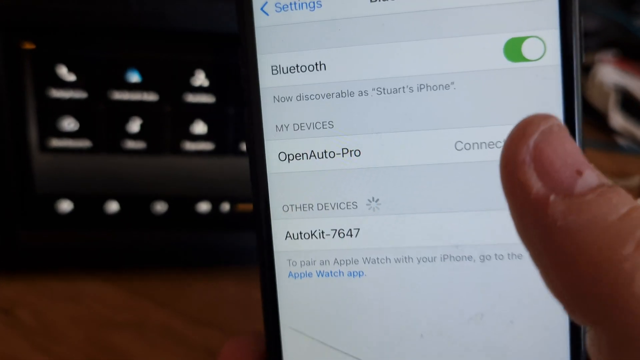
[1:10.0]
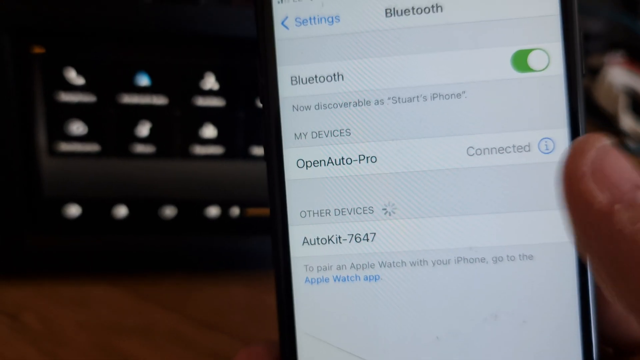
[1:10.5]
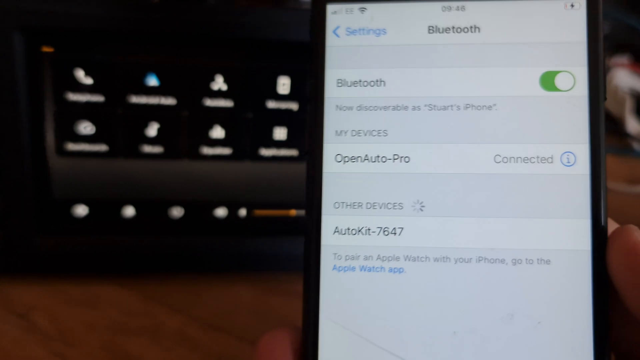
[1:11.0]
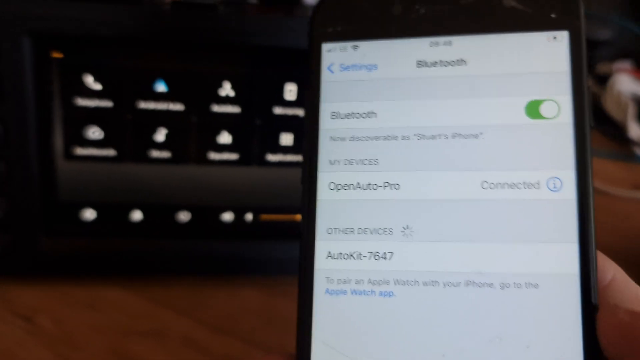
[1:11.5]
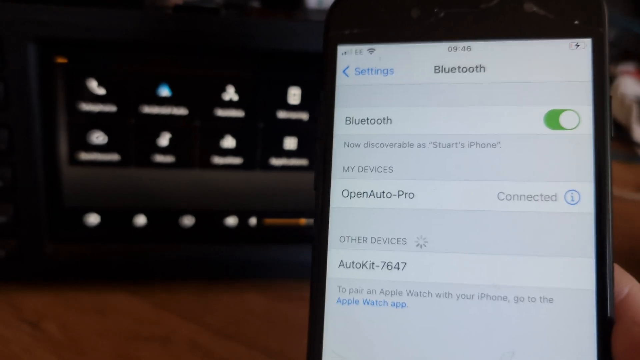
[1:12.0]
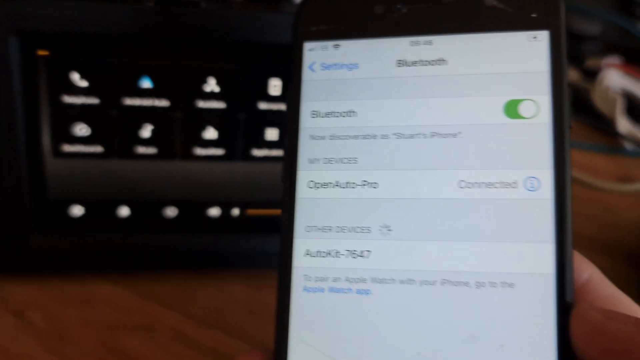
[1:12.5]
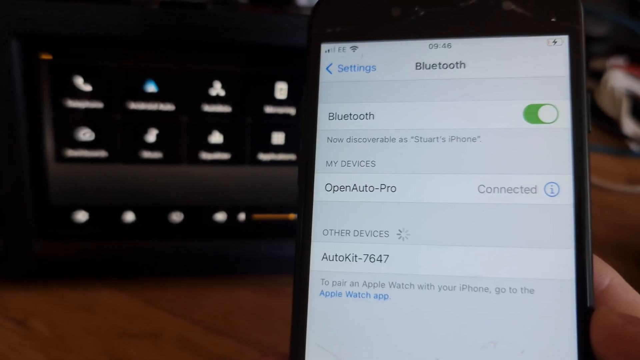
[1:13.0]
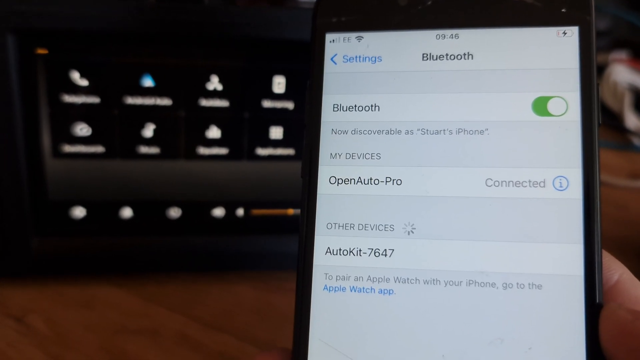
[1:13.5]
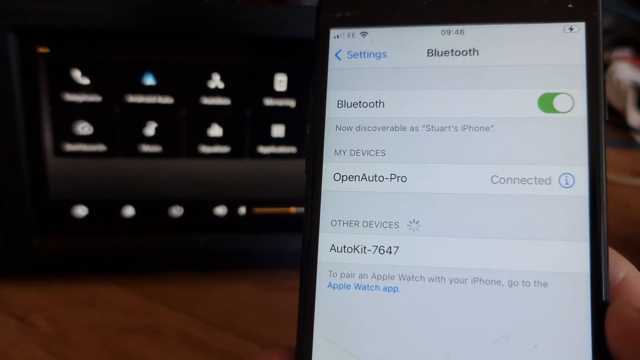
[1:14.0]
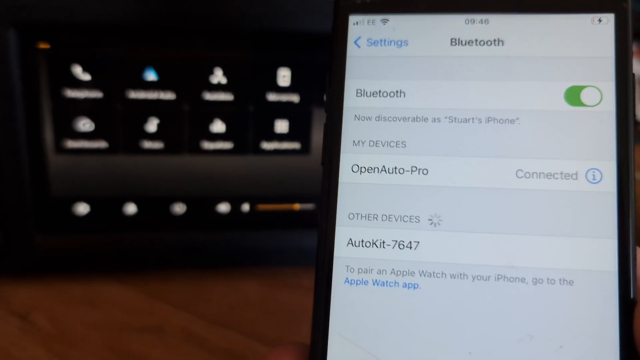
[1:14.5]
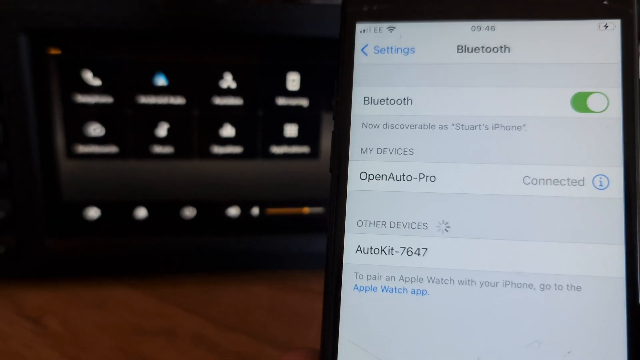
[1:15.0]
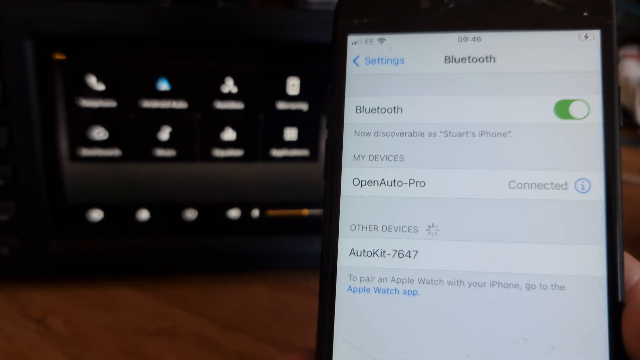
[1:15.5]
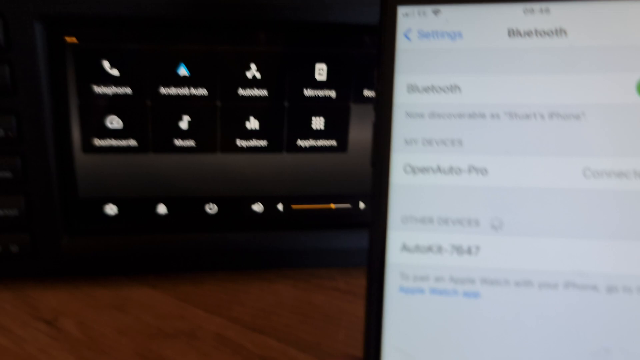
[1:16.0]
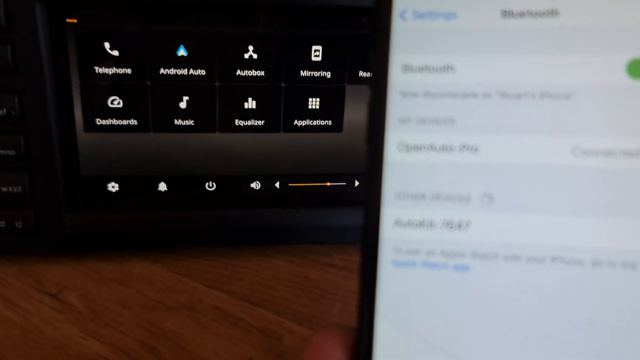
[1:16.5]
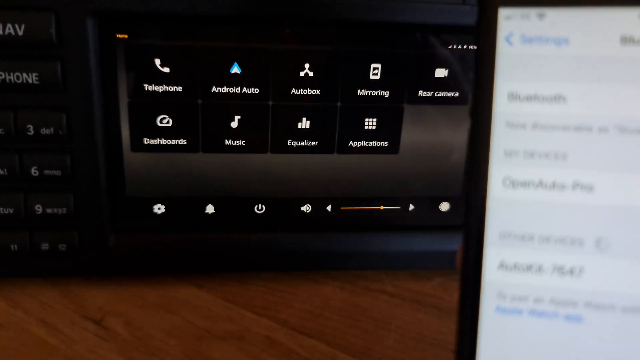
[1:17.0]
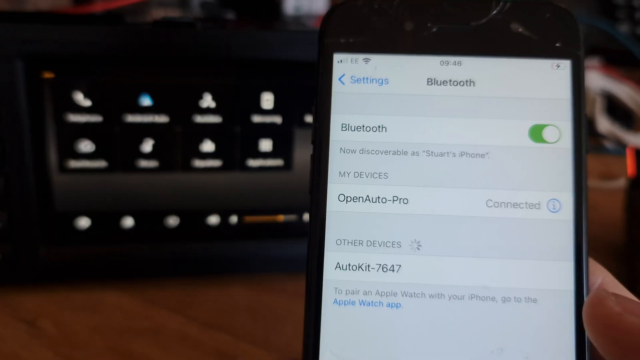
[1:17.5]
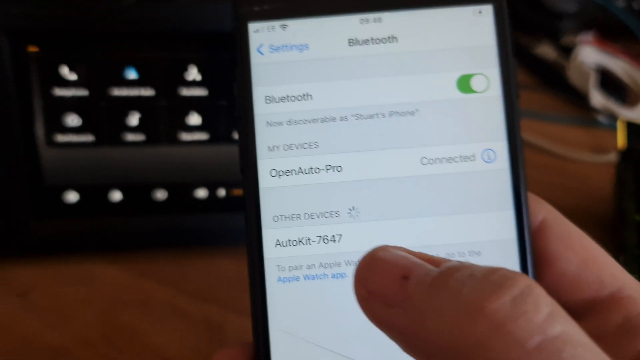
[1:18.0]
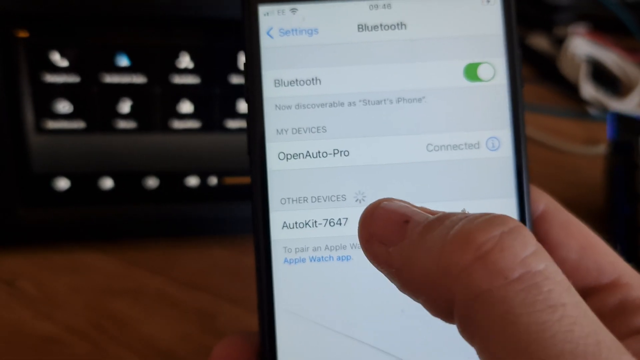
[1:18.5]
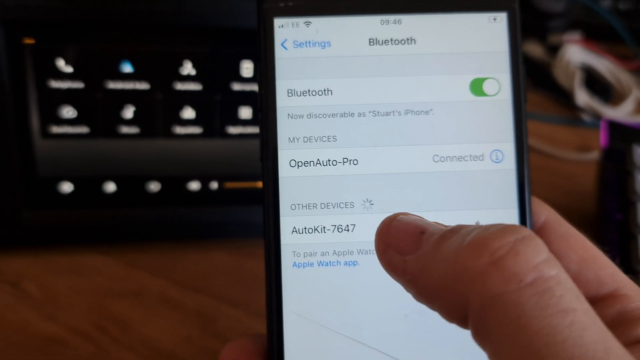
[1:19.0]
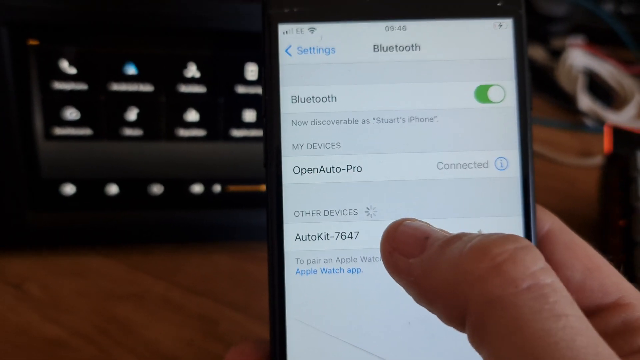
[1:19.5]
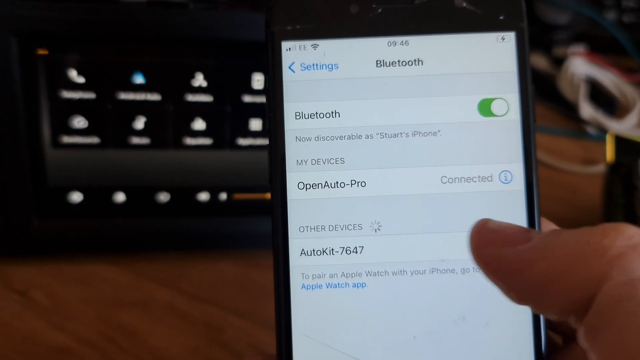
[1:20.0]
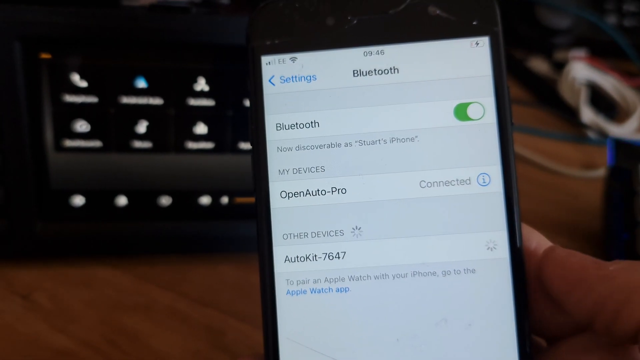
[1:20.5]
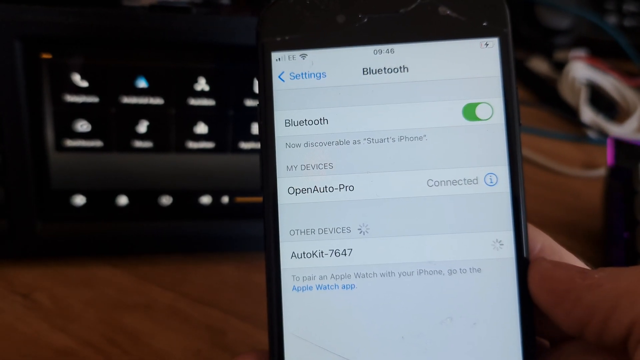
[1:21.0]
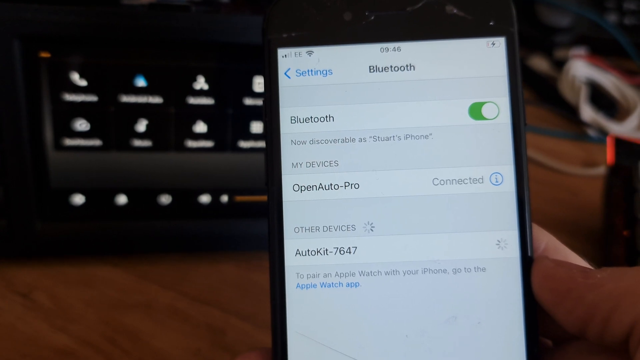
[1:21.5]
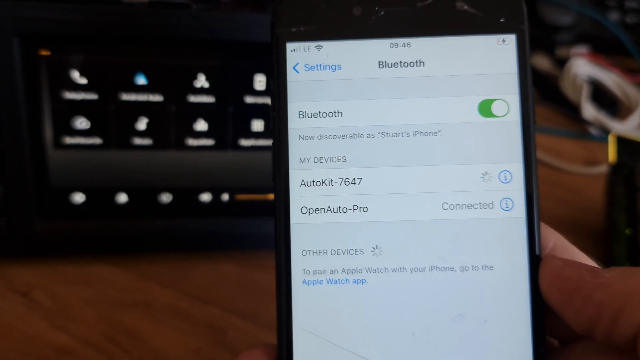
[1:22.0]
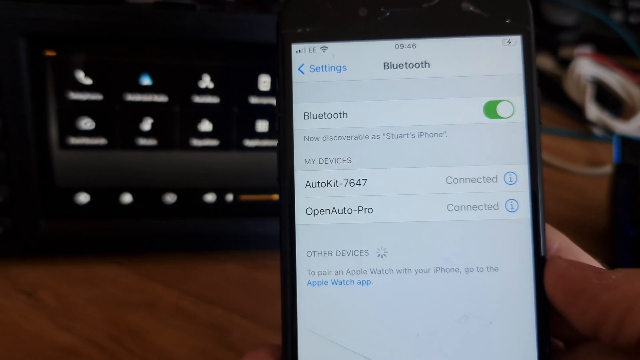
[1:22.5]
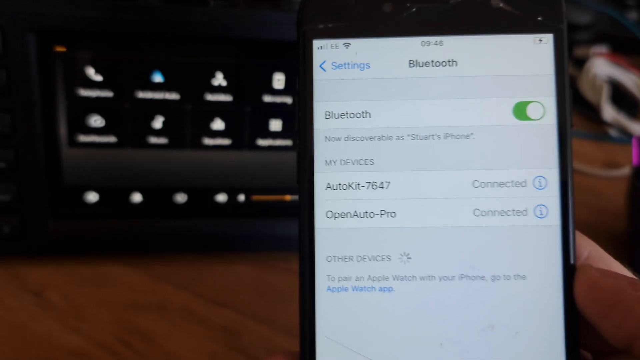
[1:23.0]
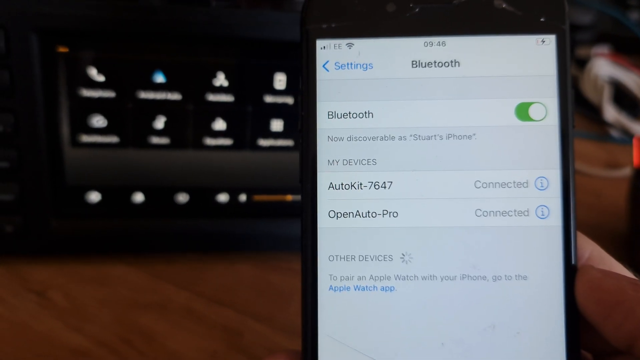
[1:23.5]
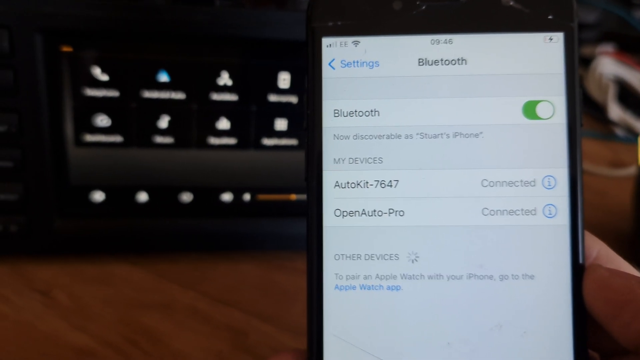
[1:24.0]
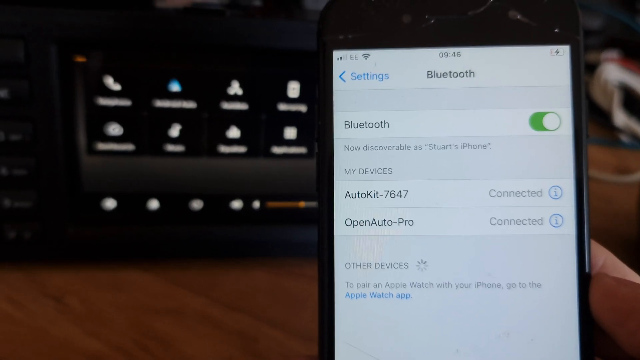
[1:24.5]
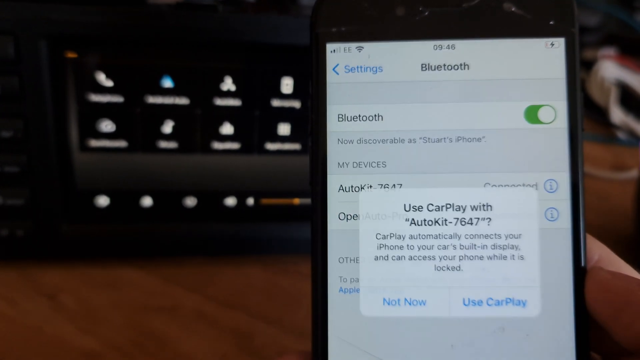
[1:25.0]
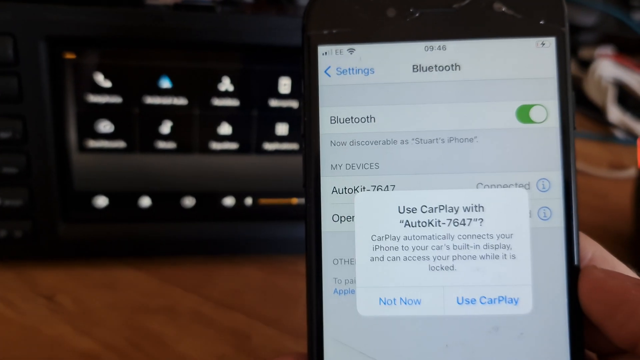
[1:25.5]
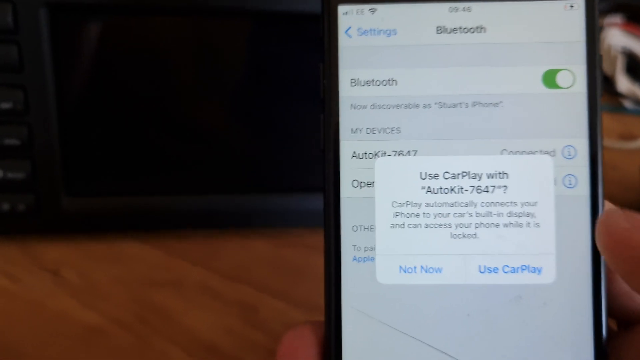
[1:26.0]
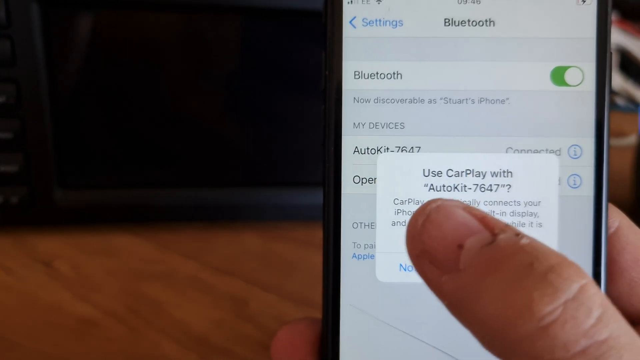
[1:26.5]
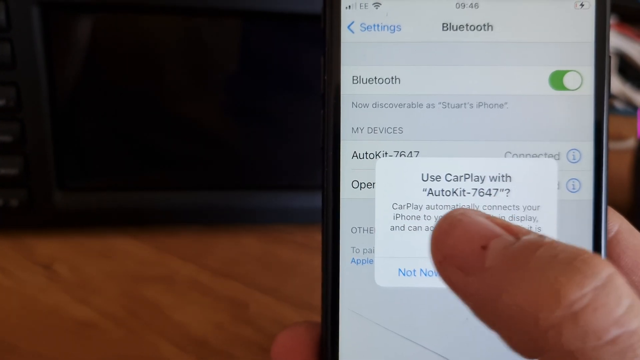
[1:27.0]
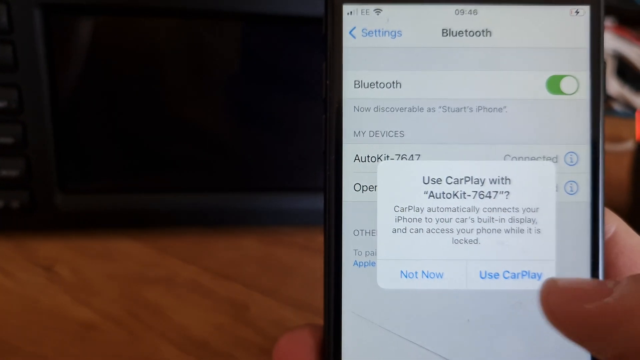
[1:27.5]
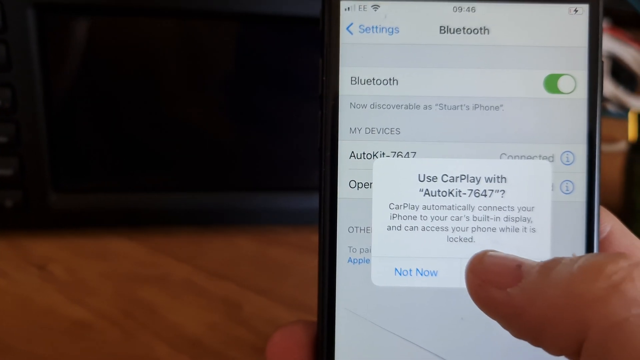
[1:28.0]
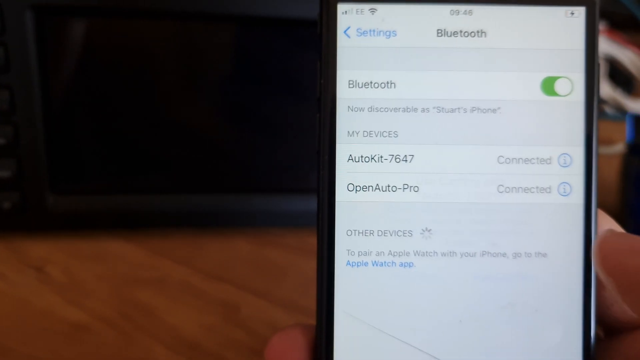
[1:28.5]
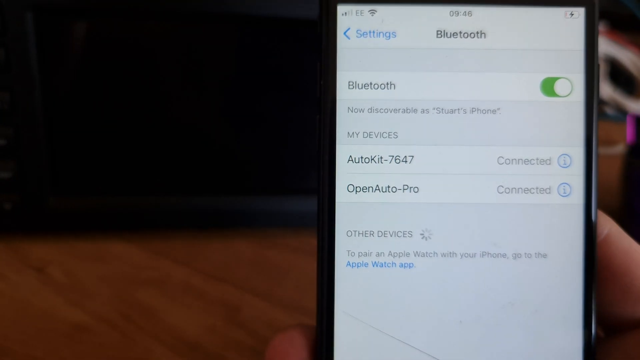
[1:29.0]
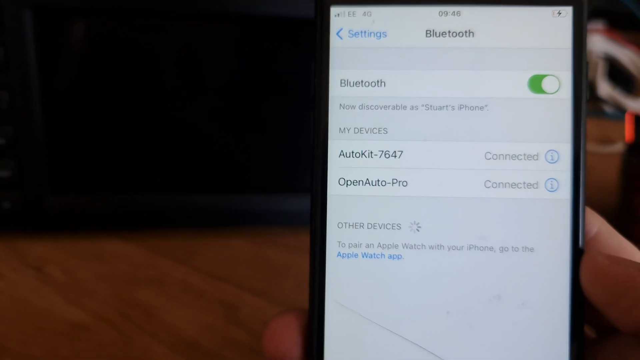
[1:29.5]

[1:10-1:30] In the iPhone's Bluetooth menu, under other devices, "AutoKits 7.6.4.7" is listed and Open Auto Pro is connected. The person clicks on AutoKits 7.6.4.7, which also becomes connected. A dialog then appears reading "Use CarPlay with AutoKit 7.6.4.7. CarPlay automatically connects to your iPhone to start your car's built-in display and can access your phone while it's locked." with two options, "Not Now" and "Use CarPlay". The person taps "Use CarPlay" with his thumb, and the connection apparently is established.